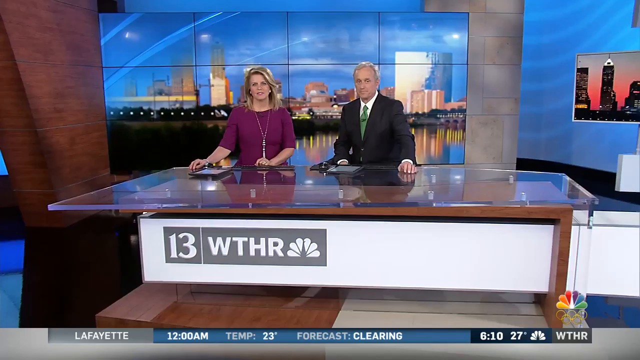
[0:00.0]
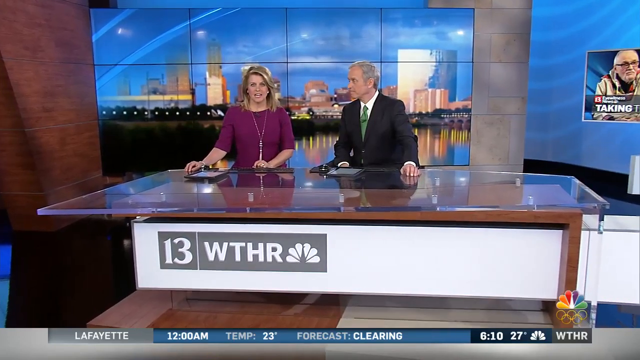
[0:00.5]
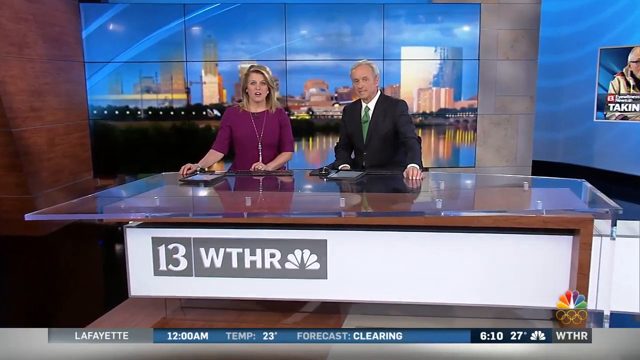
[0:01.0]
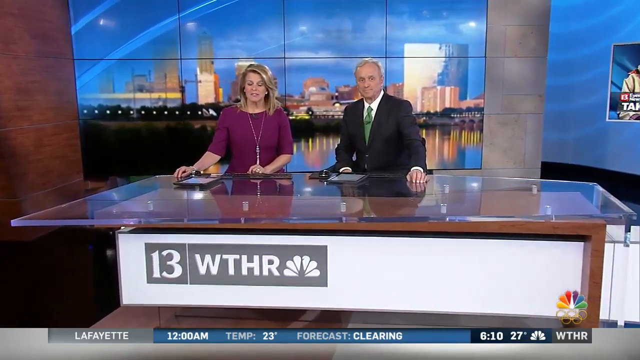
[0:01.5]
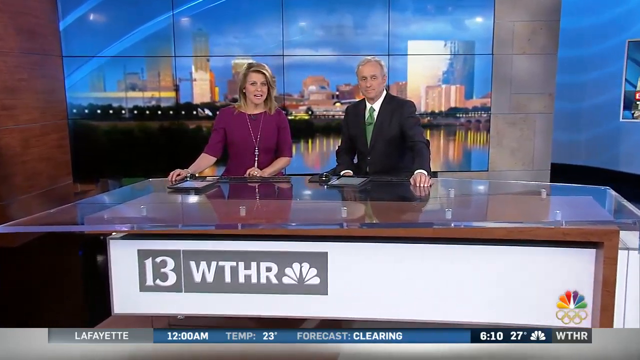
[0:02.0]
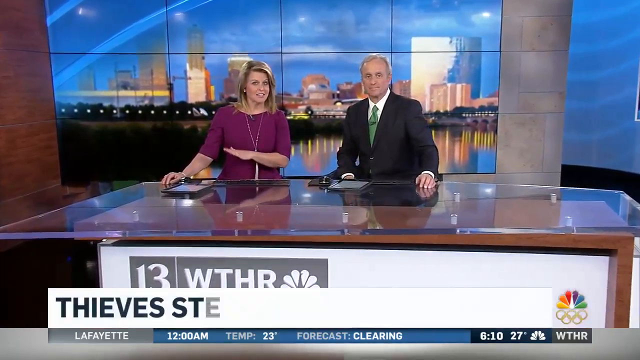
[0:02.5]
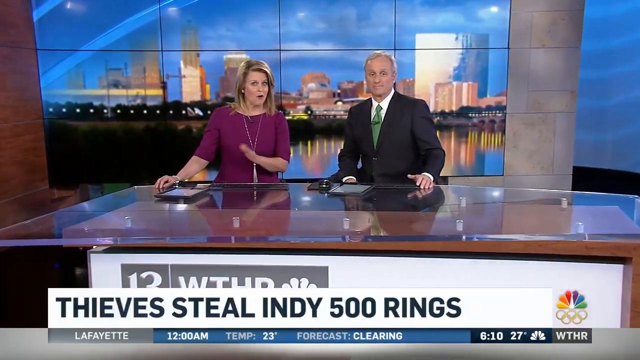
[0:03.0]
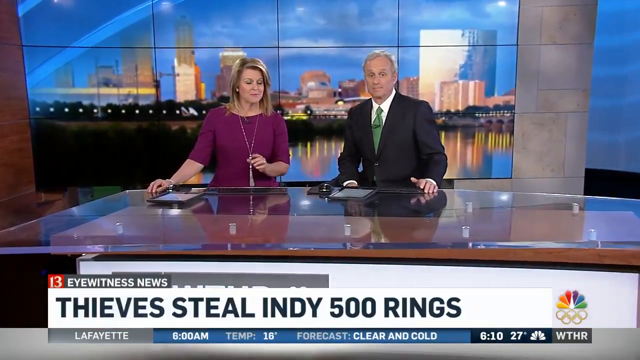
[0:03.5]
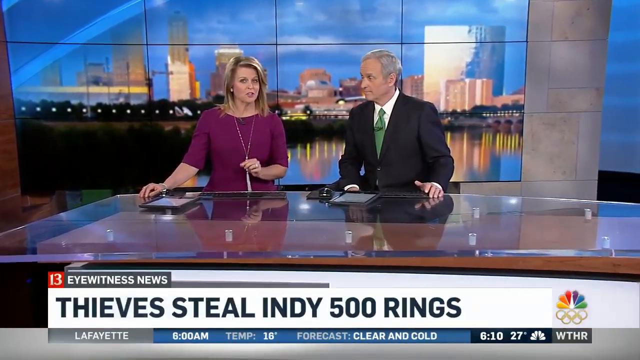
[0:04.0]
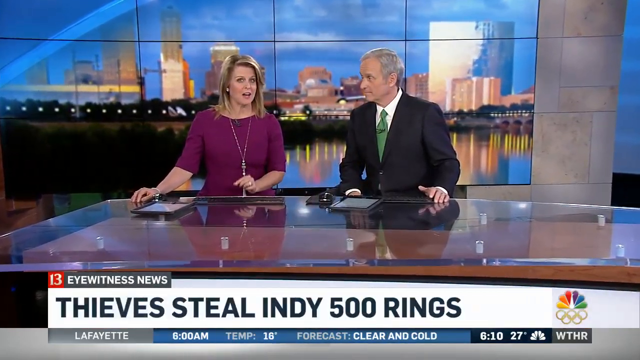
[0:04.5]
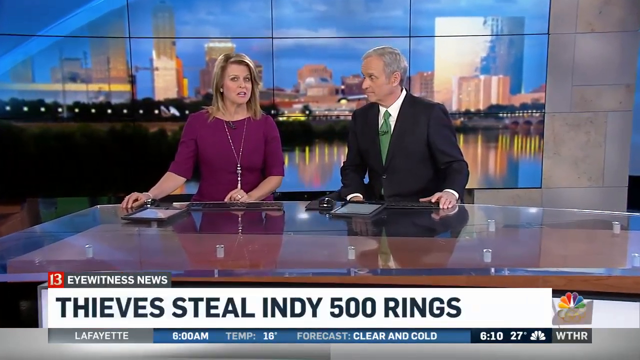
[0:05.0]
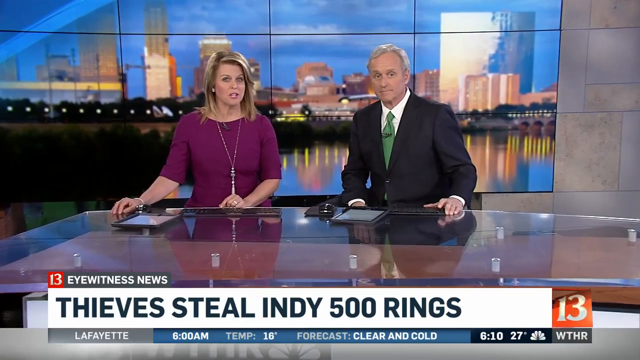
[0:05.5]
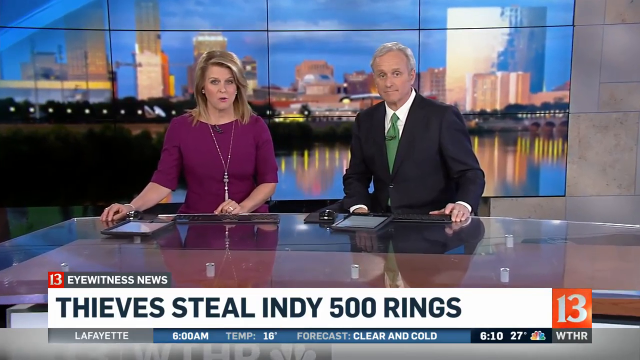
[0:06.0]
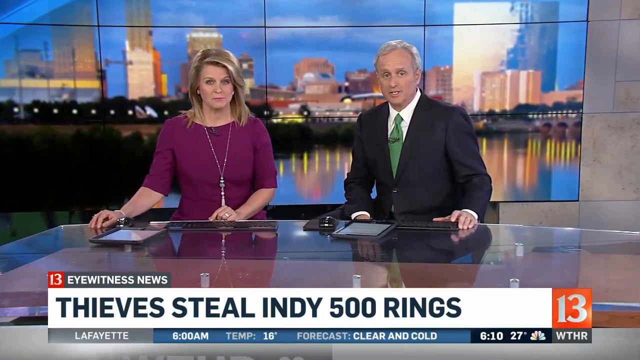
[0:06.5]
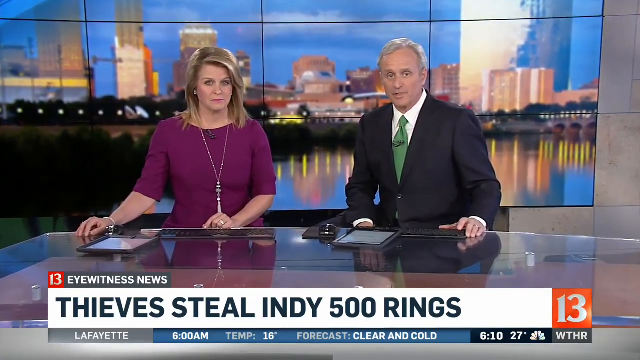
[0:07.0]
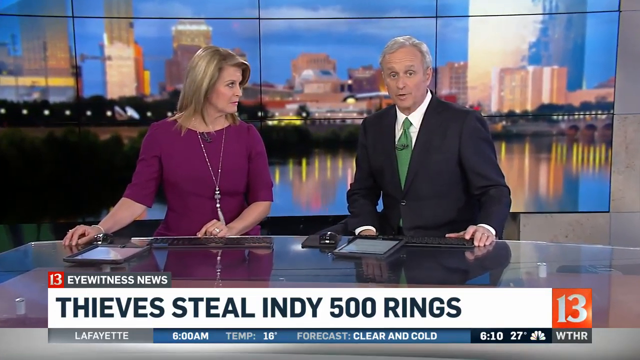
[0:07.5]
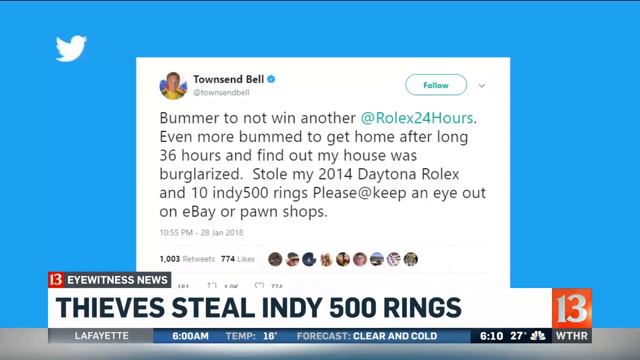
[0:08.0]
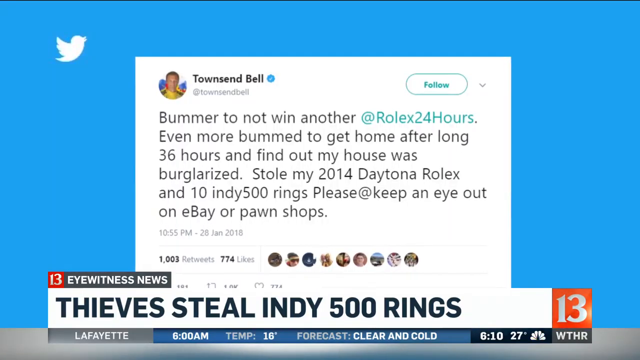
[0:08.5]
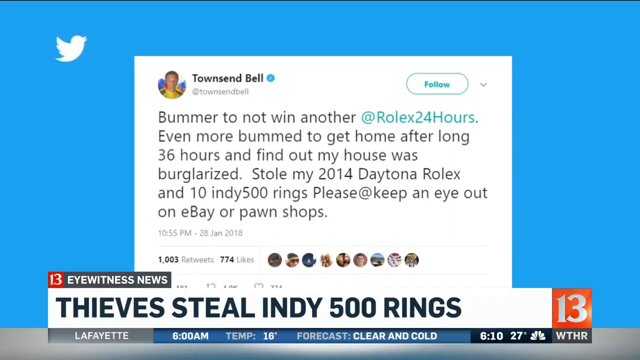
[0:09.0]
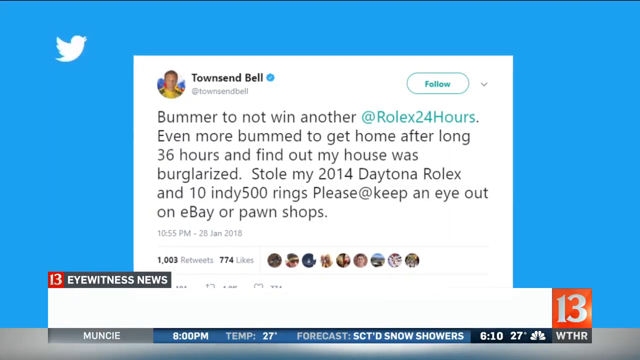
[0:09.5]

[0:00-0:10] The video appears to be a local news story from channel 13 WTHR. It opens on two anchors, one male and one female, sitting at a very large glass-top desk in front of what looks to be a city skyline. The camera moves in toward them, and a headline appears at the bottom reading "thieves steal Indy 500 rings." The female anchor wears a purple dress; the male anchor wears a black suit with a green tie and a white shirt. The shot then cuts to a Twitter message from Townsend Bell that reads: "Bummer to not win another Rolex 24 hours. Even more bummed to get home after long 36 hours and found out my house was burglarized. Stole my 2014 Daytona Rolex and 10 Indy 500 rings. Please keep an eye out on eBay or pawn shops." The video stays on this message to the end of the shot.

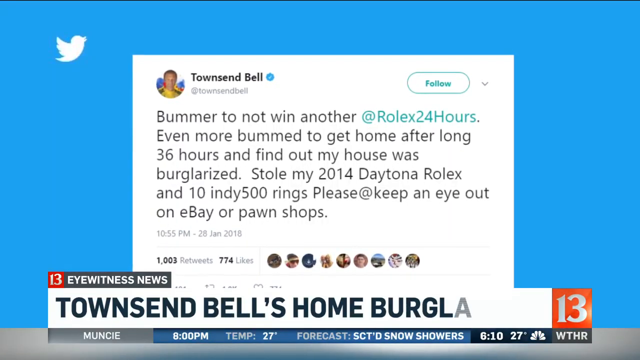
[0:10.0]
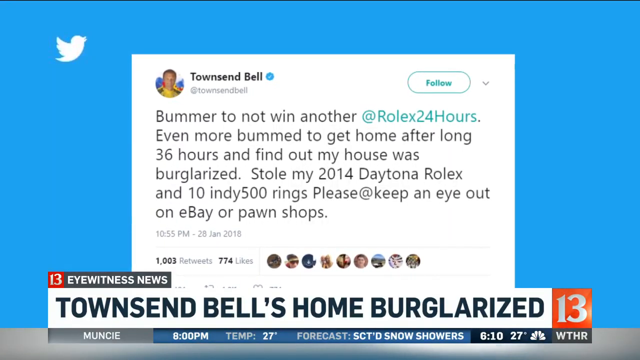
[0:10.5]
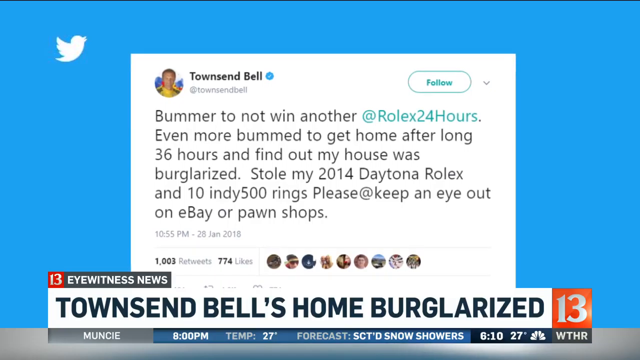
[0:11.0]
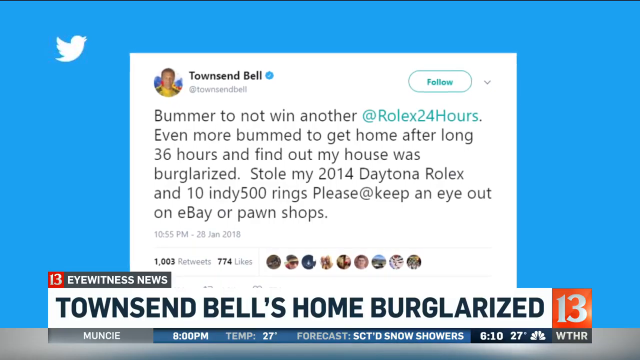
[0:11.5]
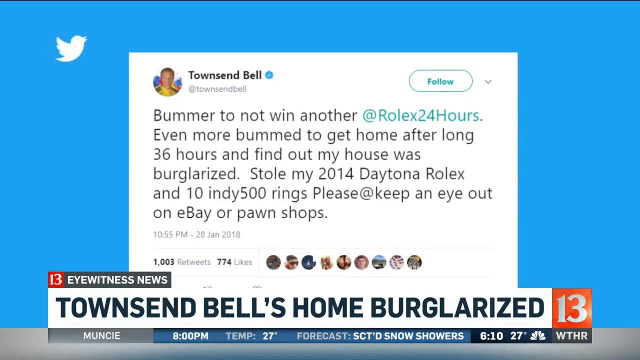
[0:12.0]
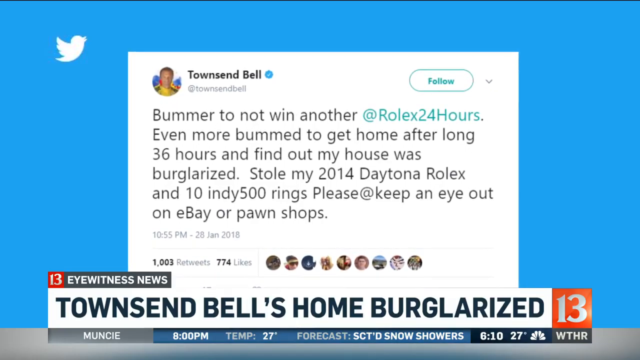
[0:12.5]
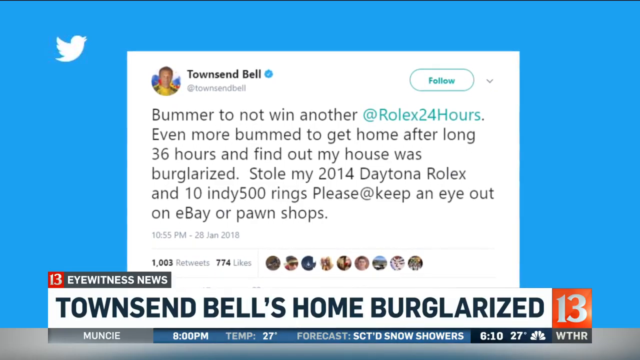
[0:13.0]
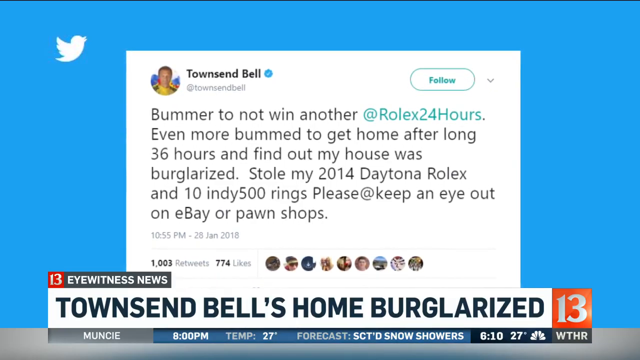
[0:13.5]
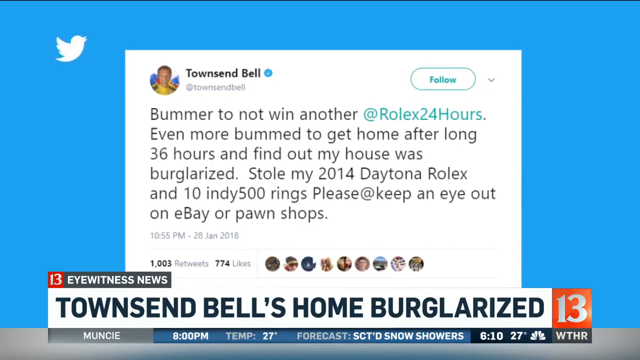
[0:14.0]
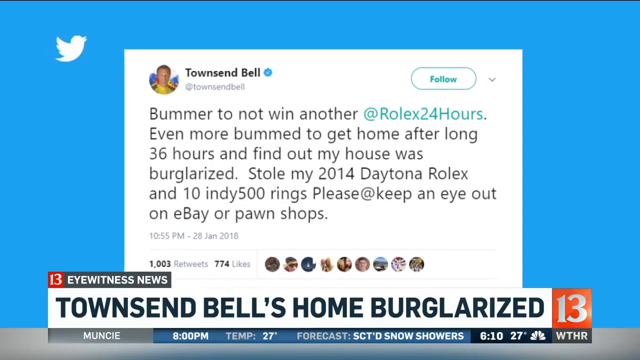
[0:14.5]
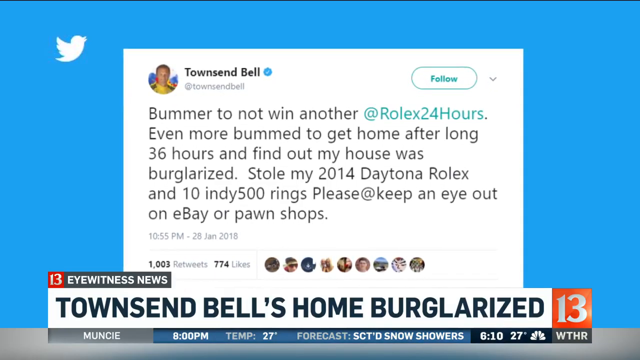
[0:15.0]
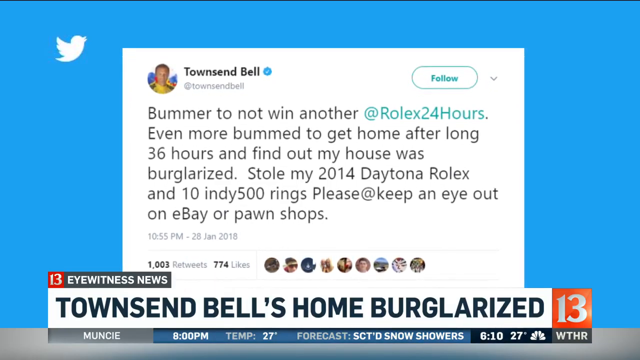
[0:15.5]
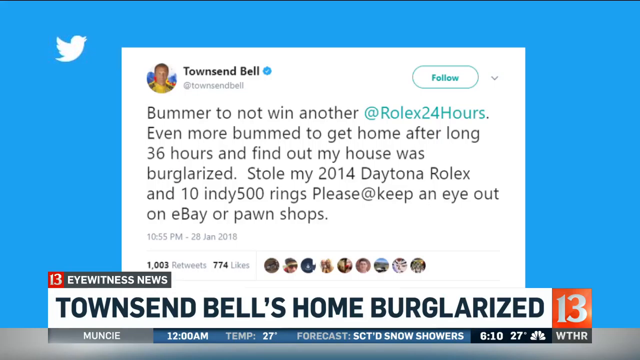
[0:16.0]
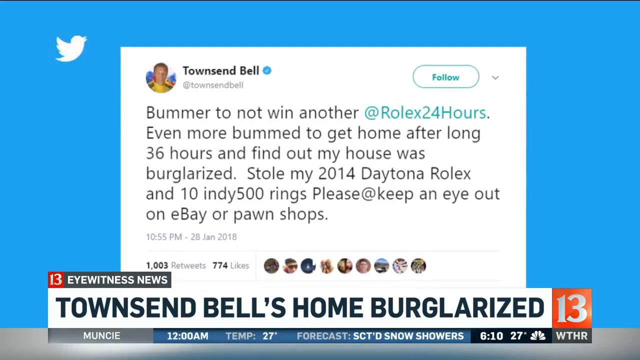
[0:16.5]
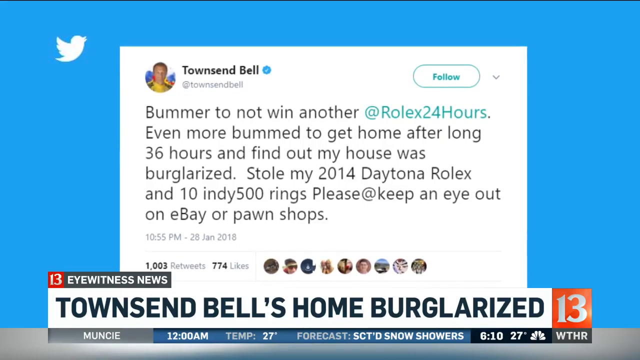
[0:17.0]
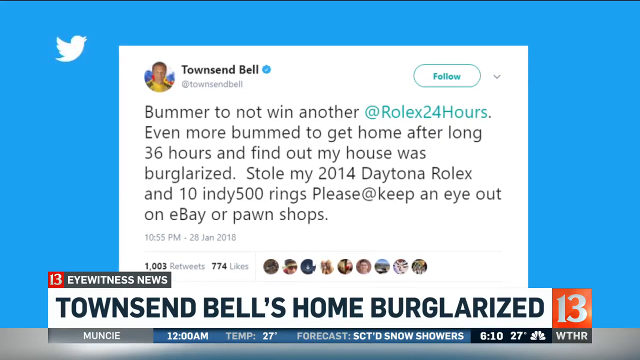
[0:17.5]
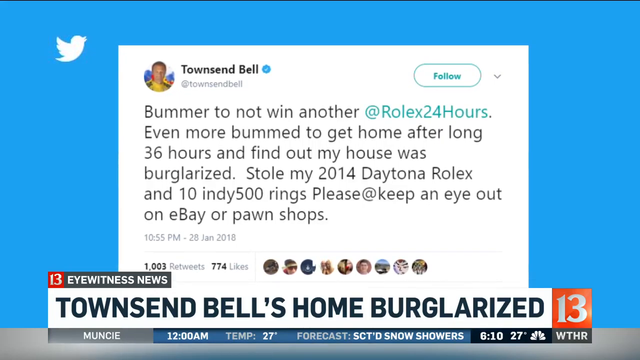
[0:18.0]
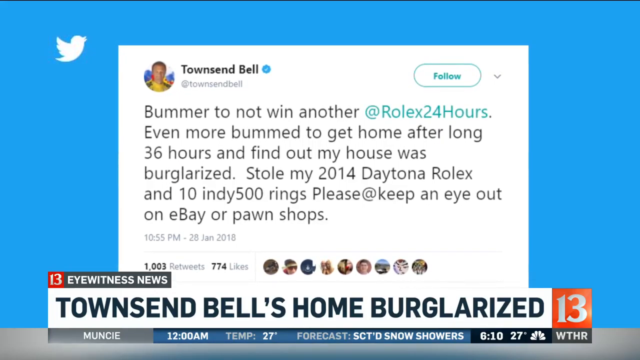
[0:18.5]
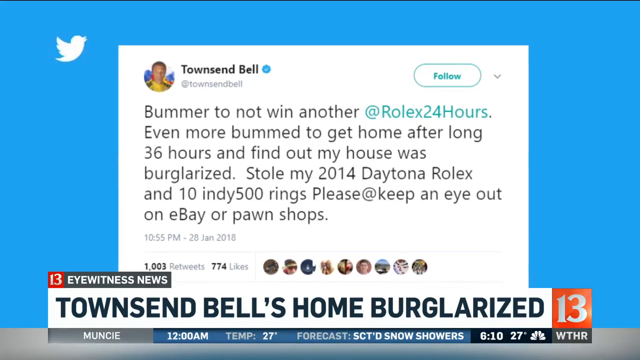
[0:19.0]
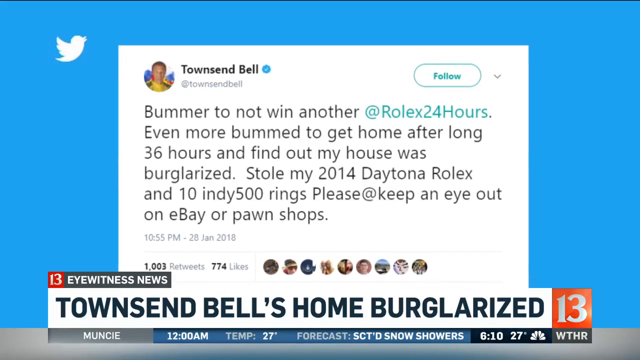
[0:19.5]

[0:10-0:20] The Twitter message from Townsend Bell remains on screen: "Bummer, do not win another at Rolex 24 hours. Even more bummed to get home after long 36 hours and find out my house is burglarized. Stole my 2014 Daytona Rolex and 10 Indy 500 rings. Please keep an eye out on eBay or pawn shop." It looks like there are over a thousand retweets and 774 likes. The story title at the bottom reads "Townsend's home burglarized." The graphic kind of zooms in a little, but the shot stays on it. The background is Twitter blue, and the little Twitter bird logo is in the corner.